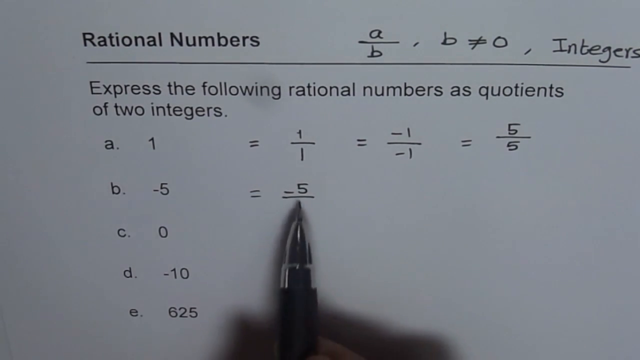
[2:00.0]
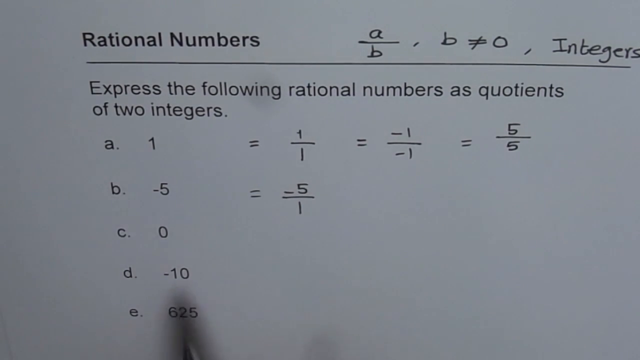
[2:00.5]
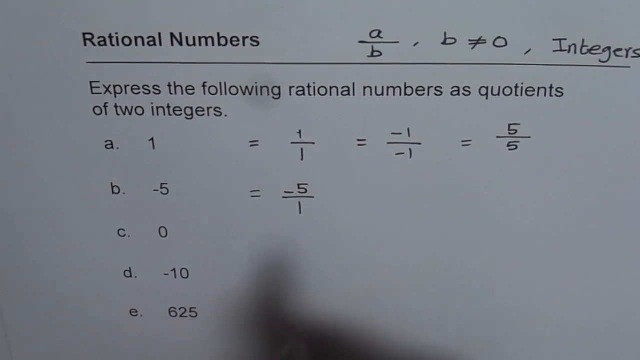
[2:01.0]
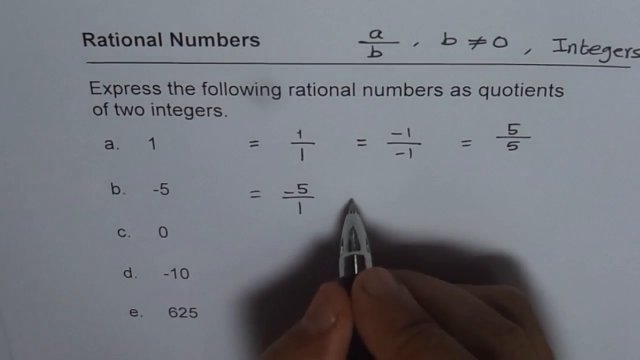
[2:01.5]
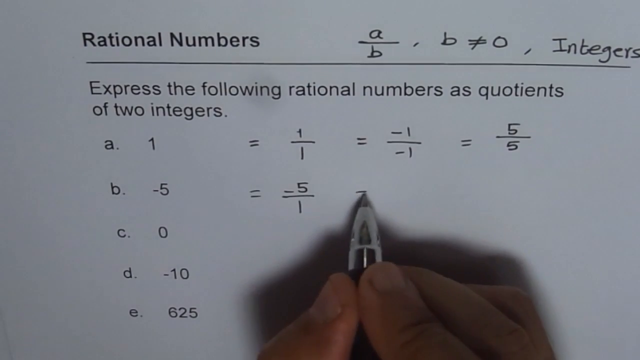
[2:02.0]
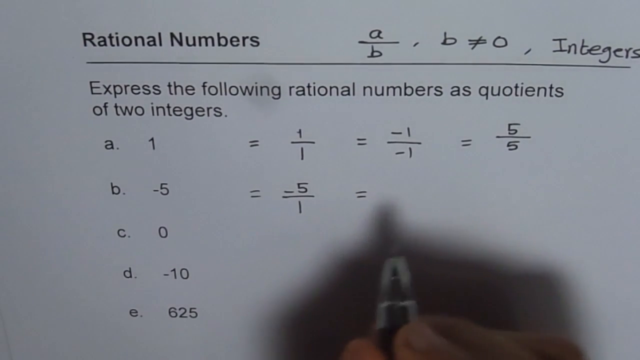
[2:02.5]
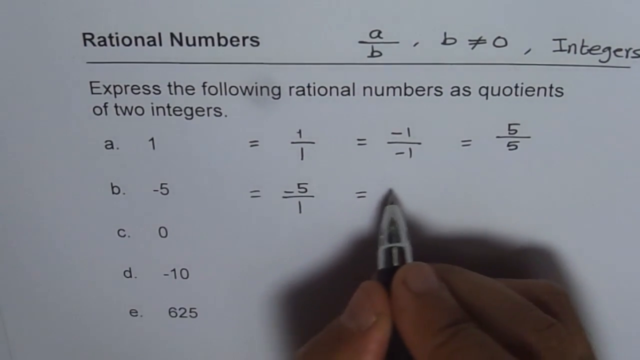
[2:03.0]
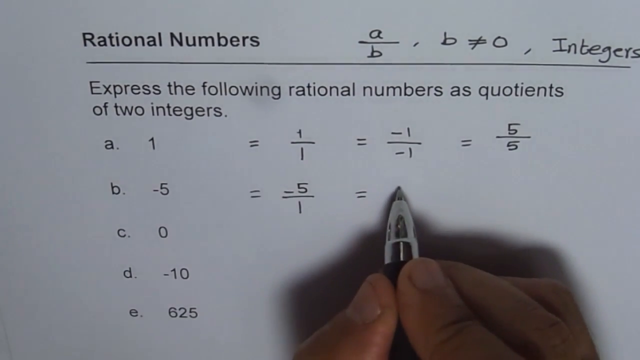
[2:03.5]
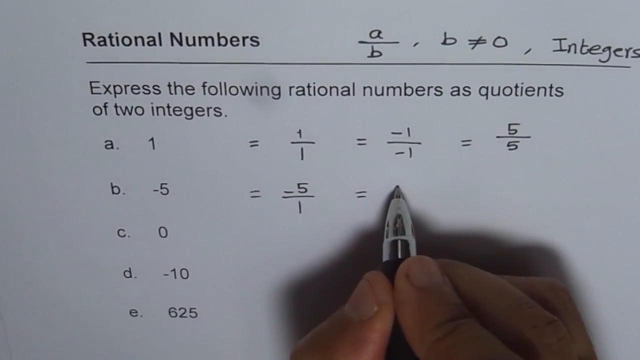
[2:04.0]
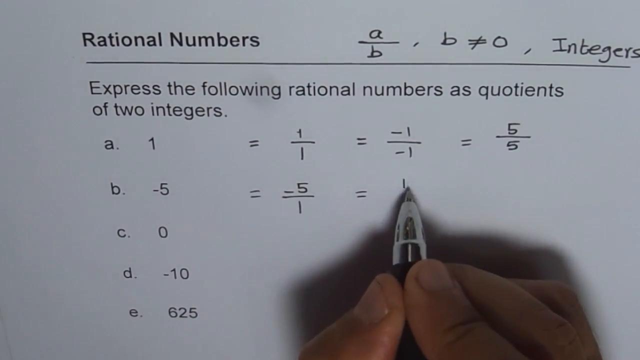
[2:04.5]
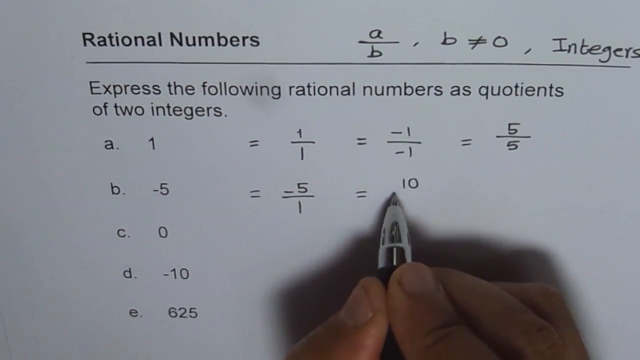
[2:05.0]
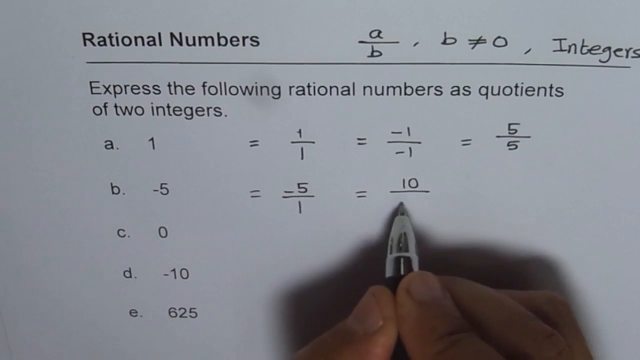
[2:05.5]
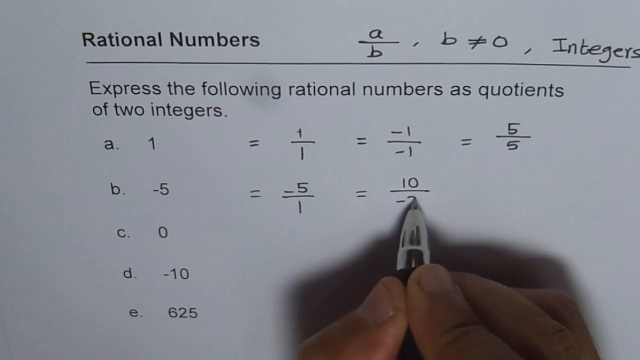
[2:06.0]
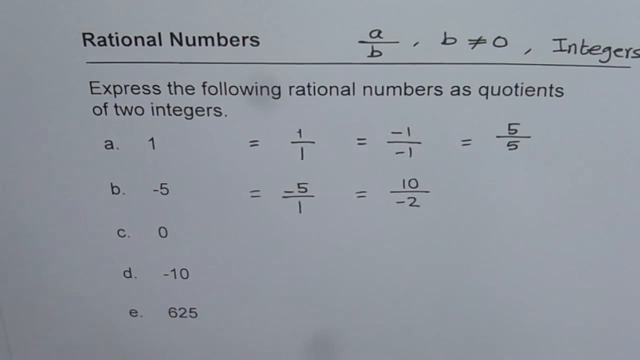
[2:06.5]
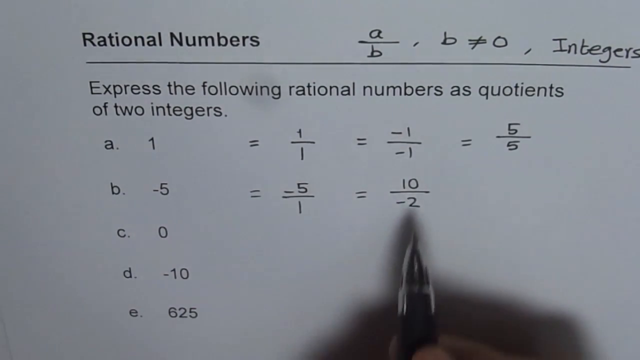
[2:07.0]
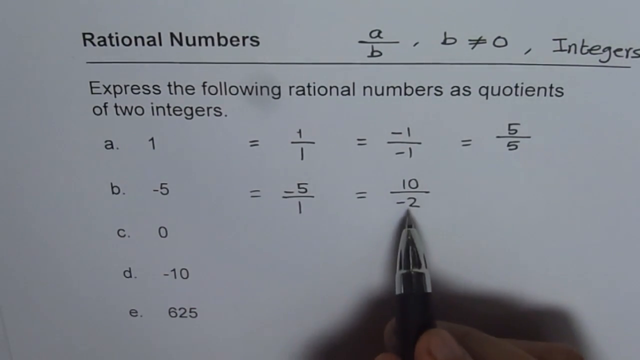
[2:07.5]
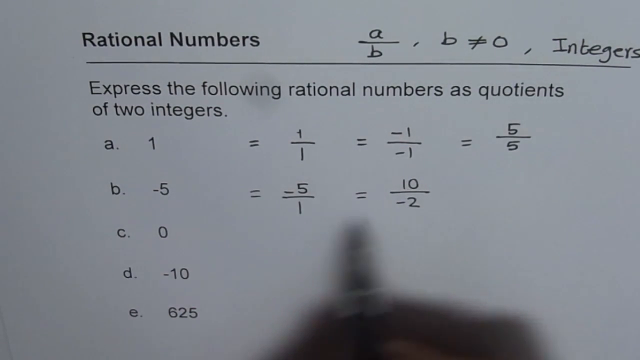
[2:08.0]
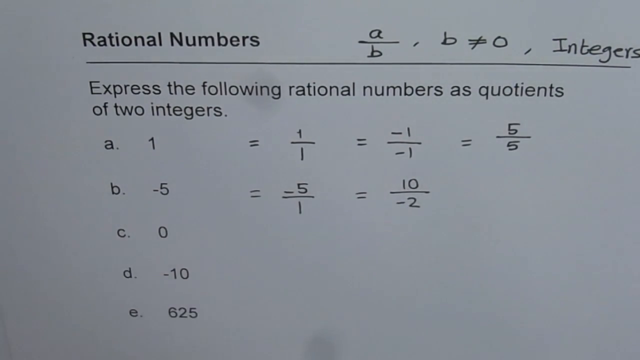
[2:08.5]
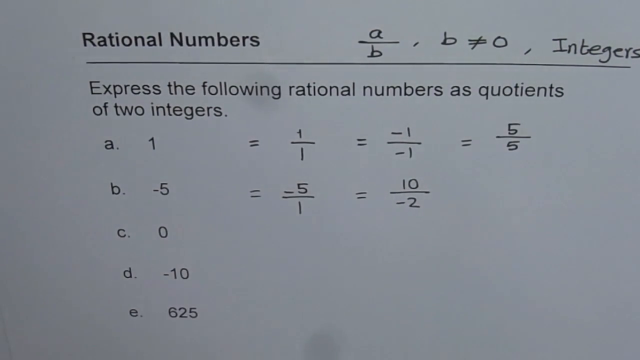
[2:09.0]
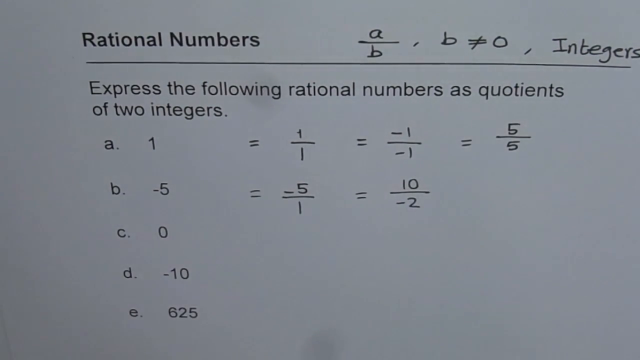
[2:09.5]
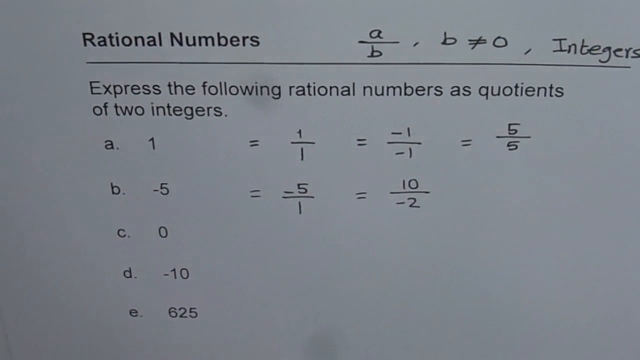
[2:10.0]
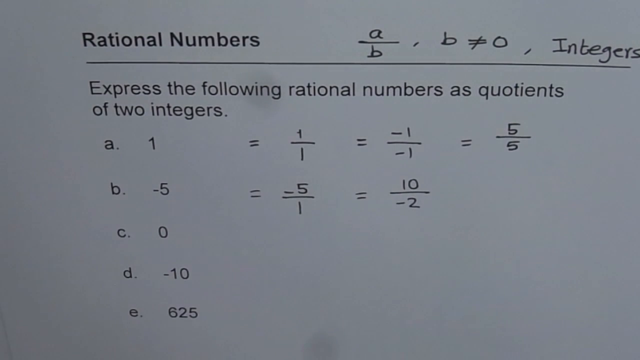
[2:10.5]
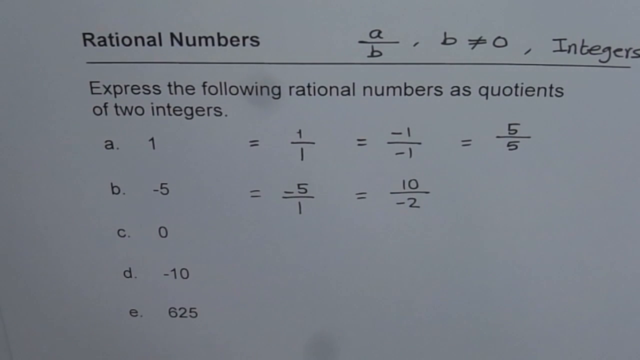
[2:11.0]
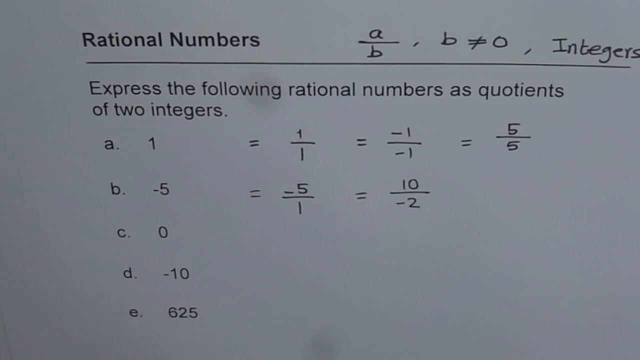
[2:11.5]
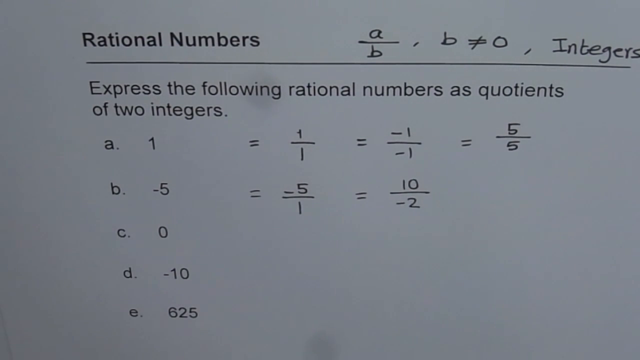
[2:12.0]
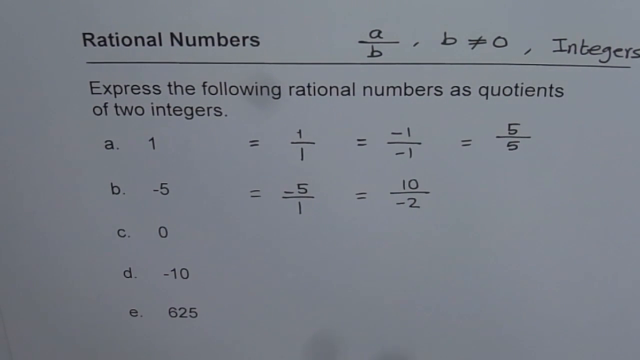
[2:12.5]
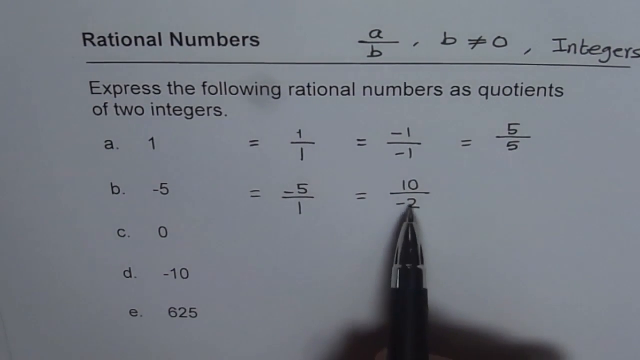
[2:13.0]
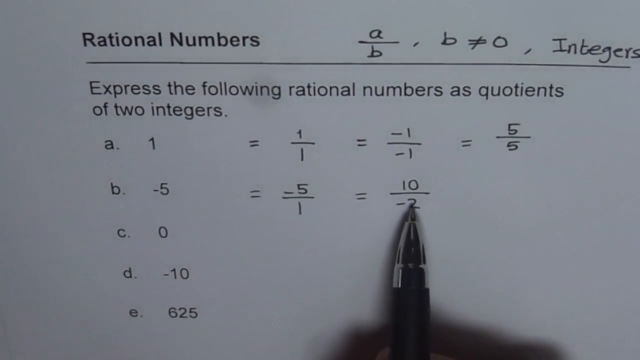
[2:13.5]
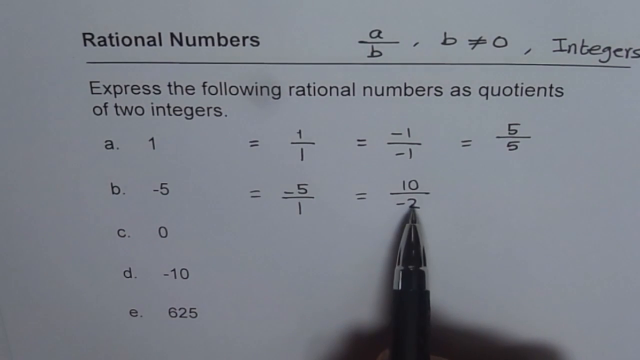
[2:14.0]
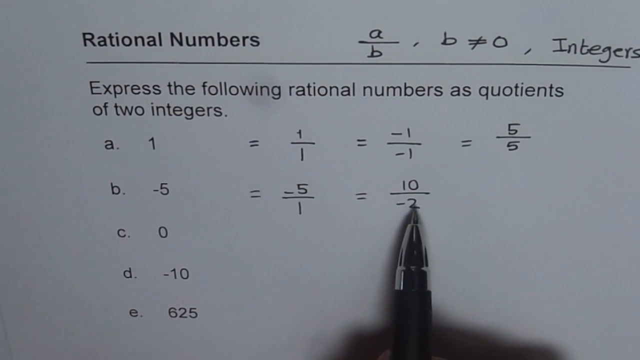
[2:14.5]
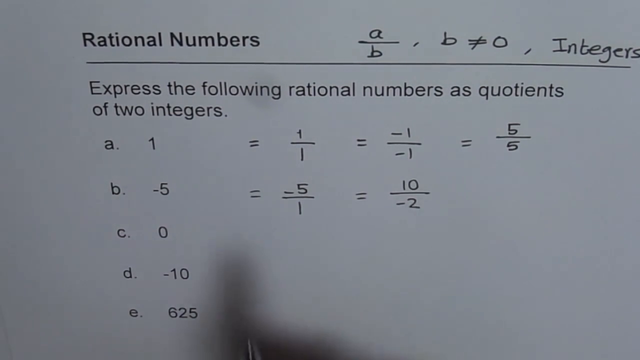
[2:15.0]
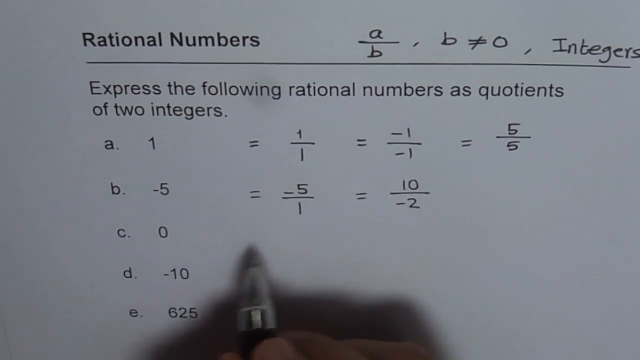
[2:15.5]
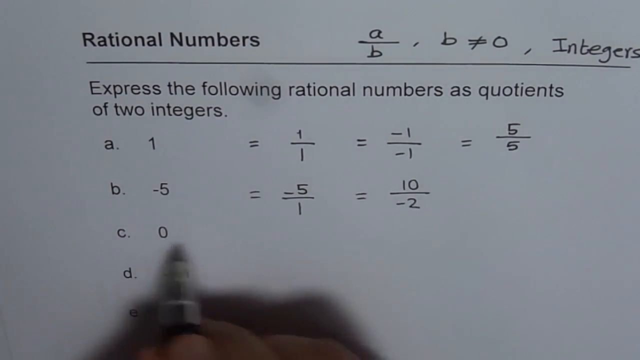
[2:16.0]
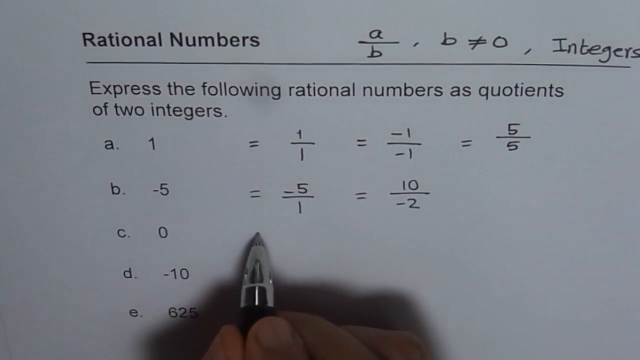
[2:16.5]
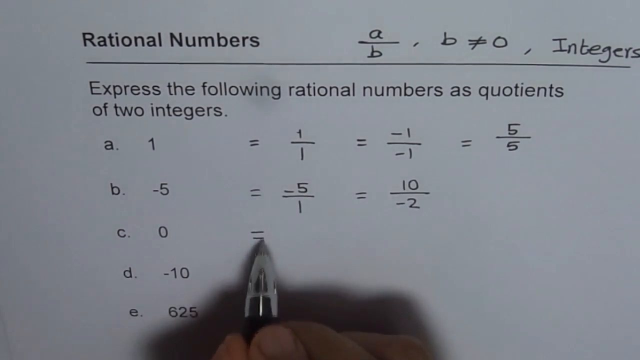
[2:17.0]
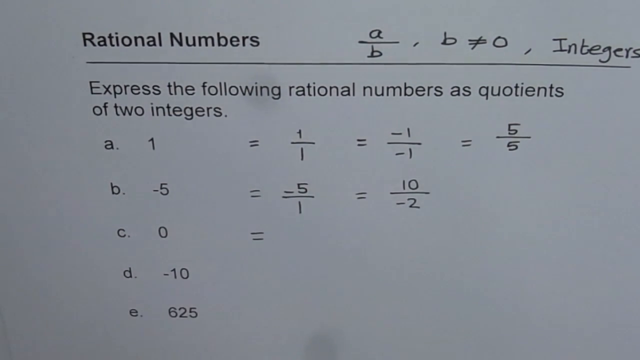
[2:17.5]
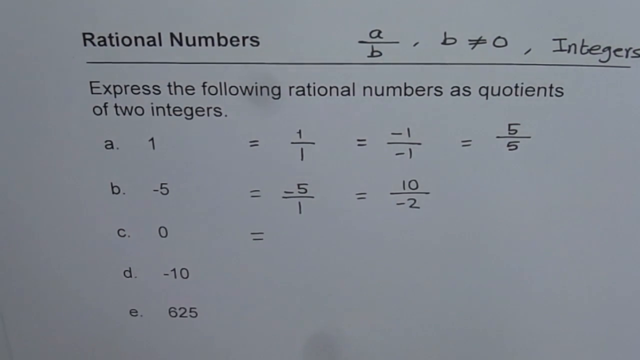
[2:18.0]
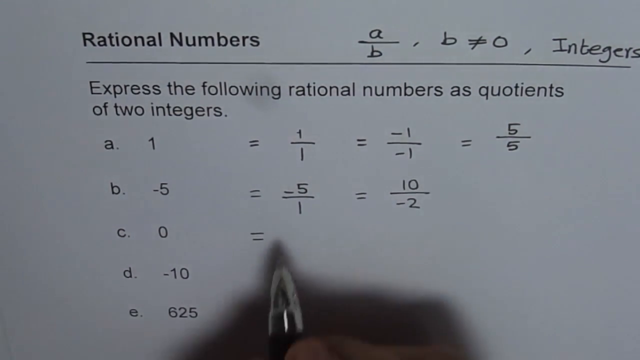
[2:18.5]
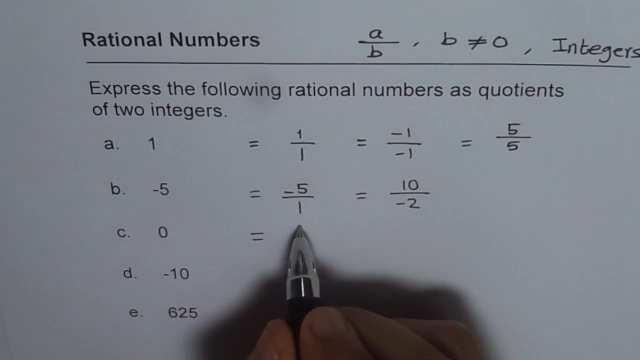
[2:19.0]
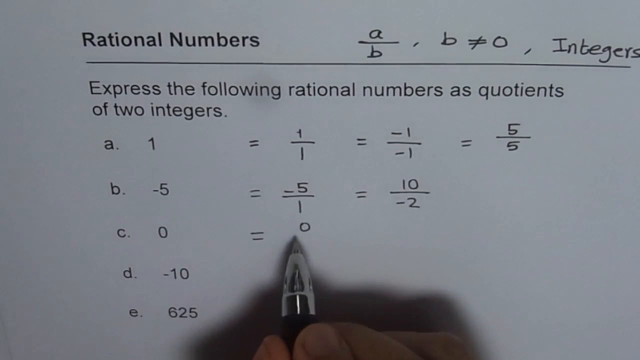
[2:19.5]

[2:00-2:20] The hand writes another equals sign to the right of the minus 5 over 1, then writes 10 over minus 2, pointing to the 10 and then to the minus 2 with the tip of the pen before disappearing toward the bottom of the screen. A moment later the hand returns, mostly only the pen visible, pointing at the 10 over minus 2, and then quickly moves to the line of item C, which is 0. He writes an equals sign, and the hand goes down, disappearing toward the bottom of the screen. Each time the hand comes back, its shadow comes with it. Only the very top of the fingertip holding the pen is visible as he writes 0 and then a line.